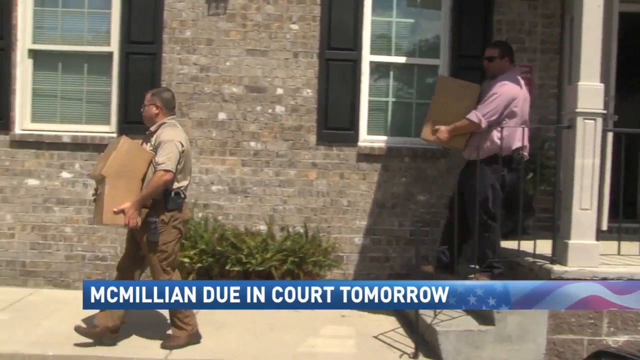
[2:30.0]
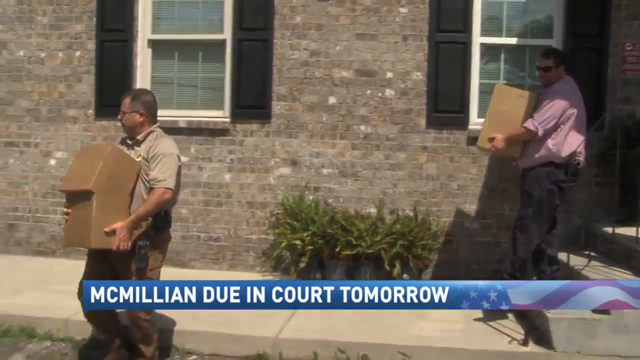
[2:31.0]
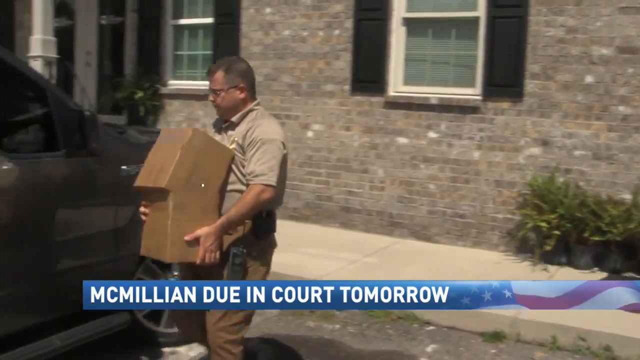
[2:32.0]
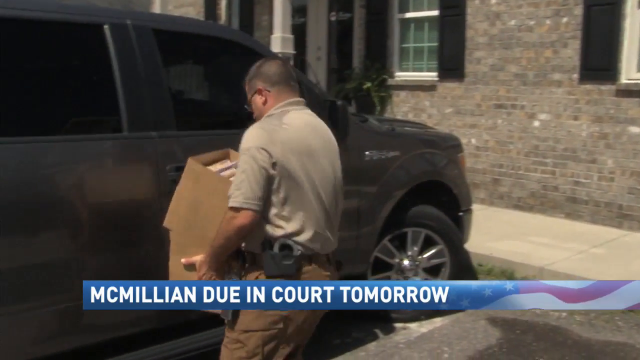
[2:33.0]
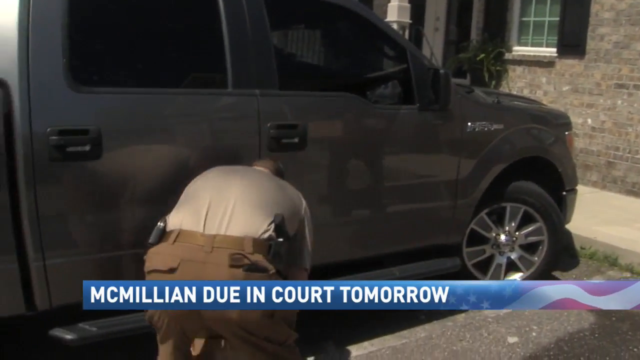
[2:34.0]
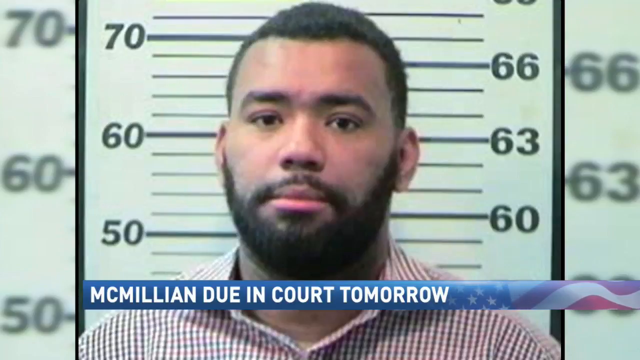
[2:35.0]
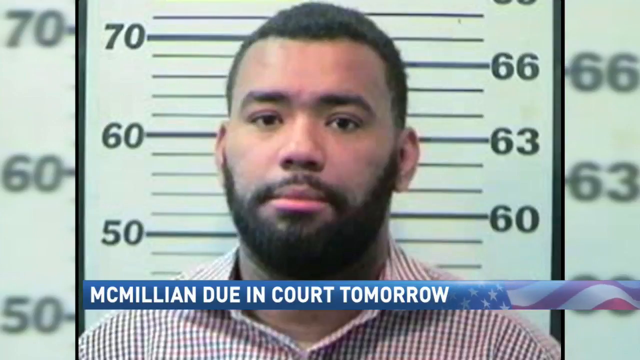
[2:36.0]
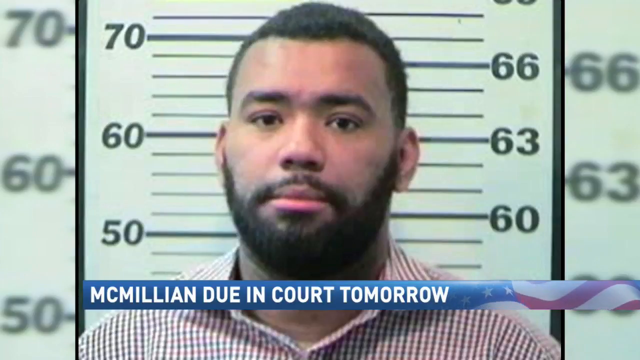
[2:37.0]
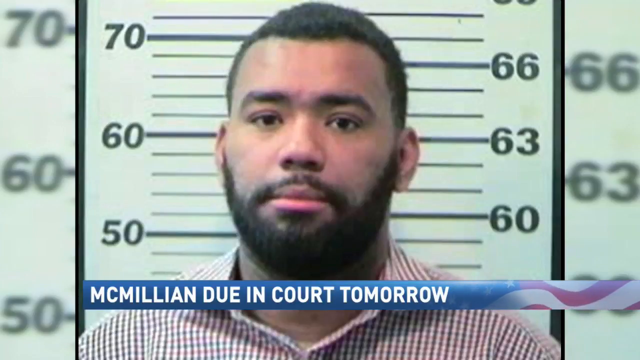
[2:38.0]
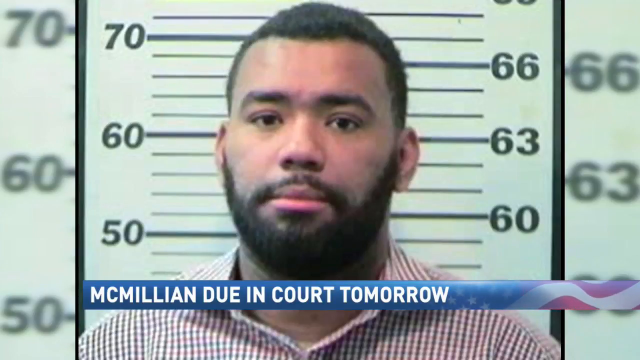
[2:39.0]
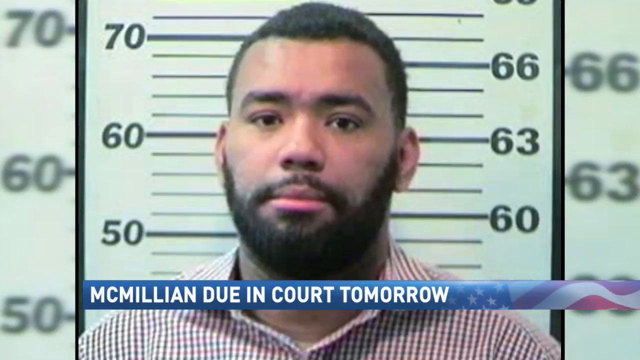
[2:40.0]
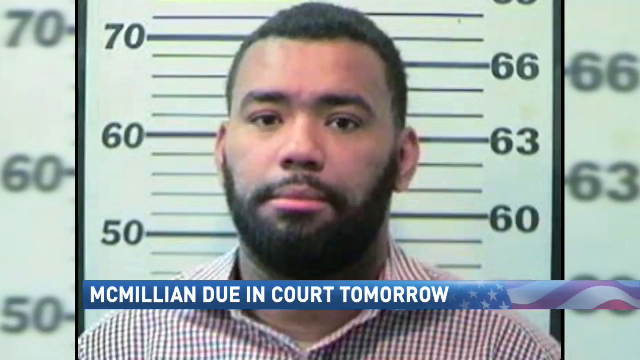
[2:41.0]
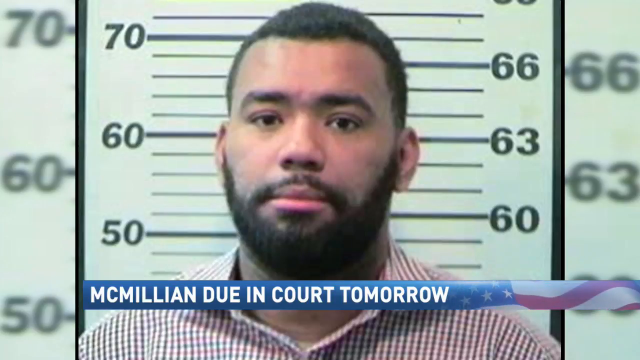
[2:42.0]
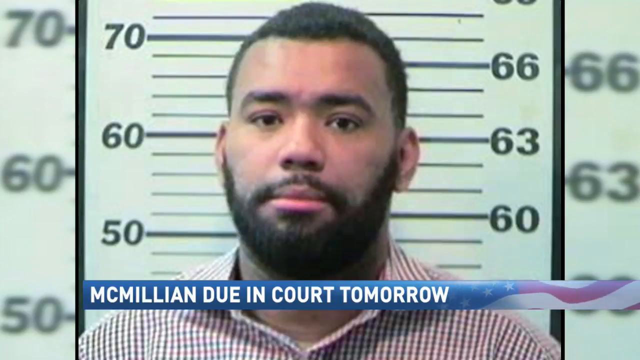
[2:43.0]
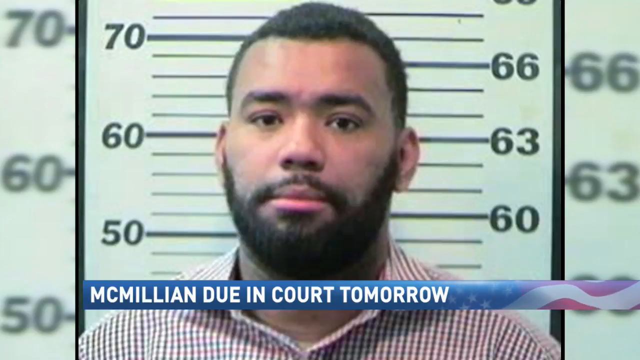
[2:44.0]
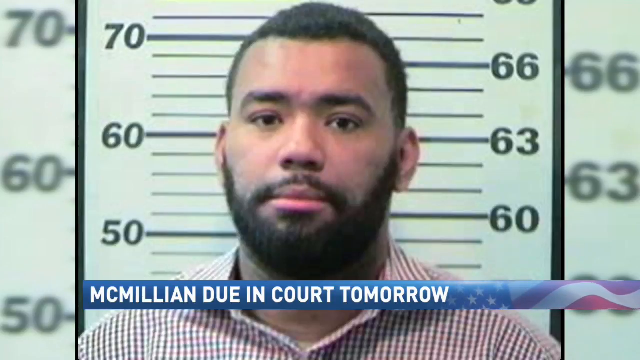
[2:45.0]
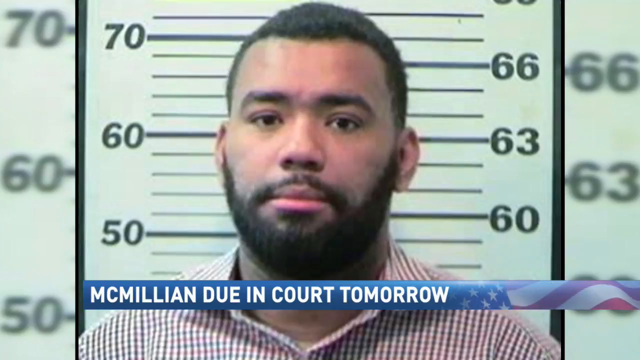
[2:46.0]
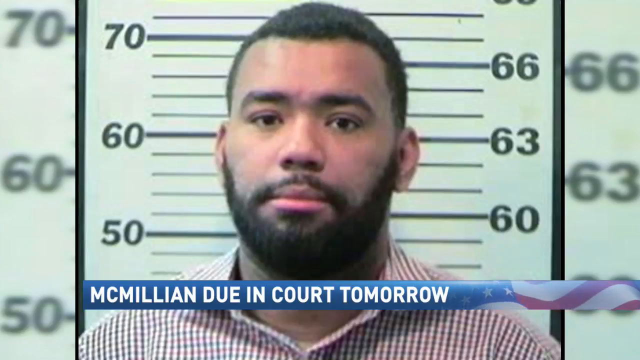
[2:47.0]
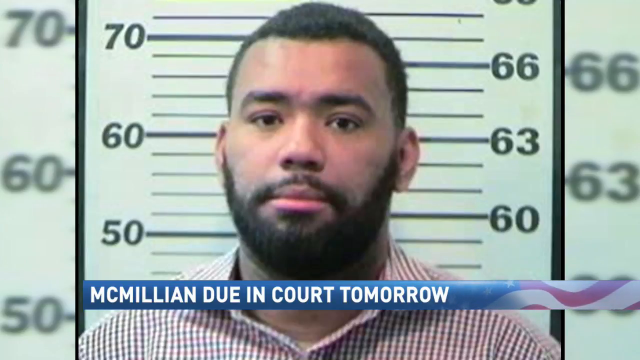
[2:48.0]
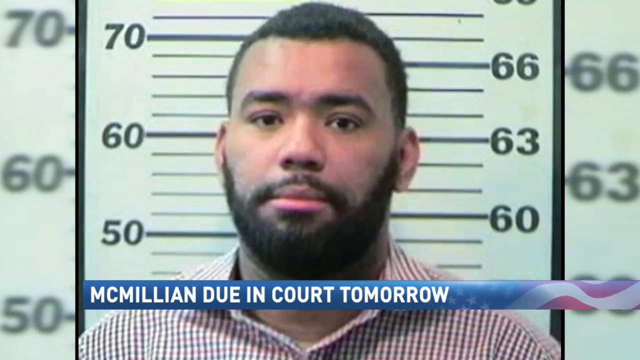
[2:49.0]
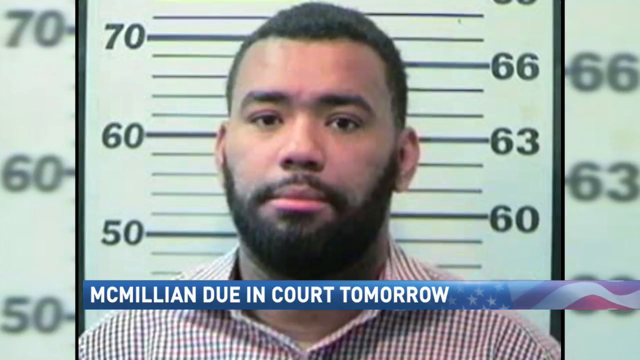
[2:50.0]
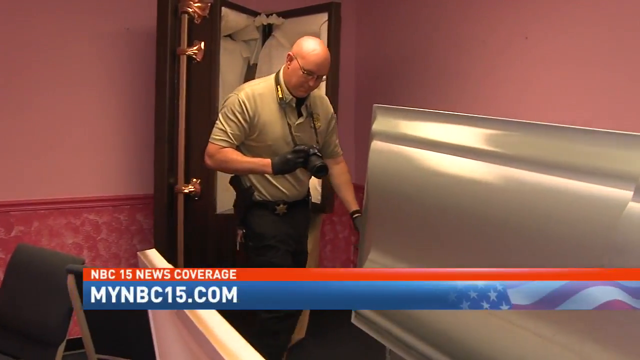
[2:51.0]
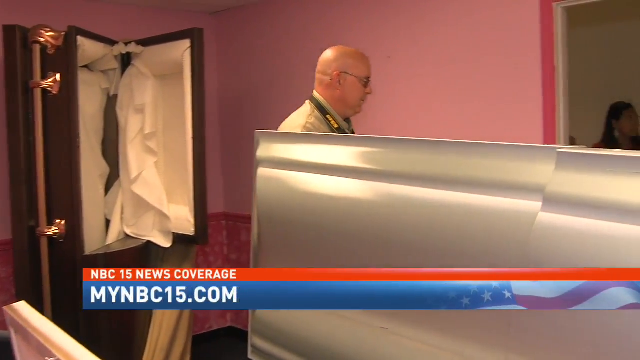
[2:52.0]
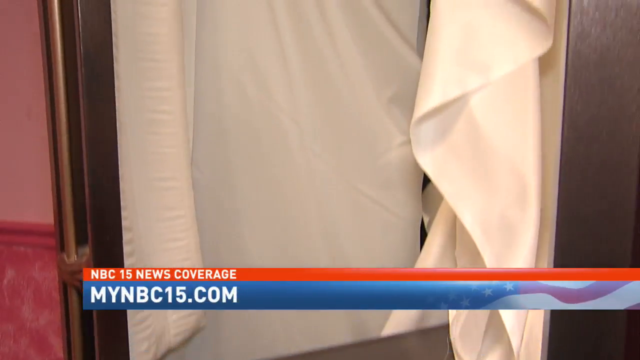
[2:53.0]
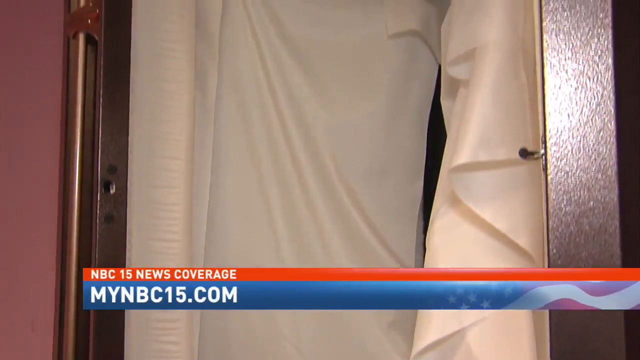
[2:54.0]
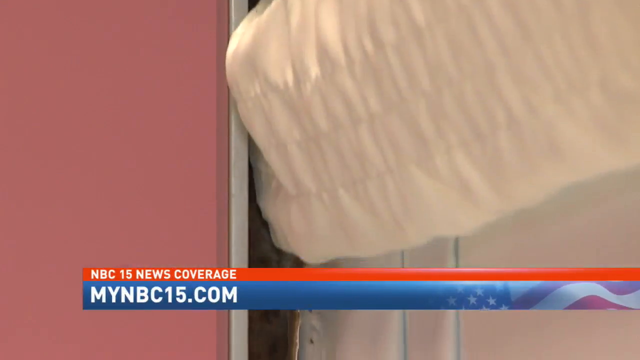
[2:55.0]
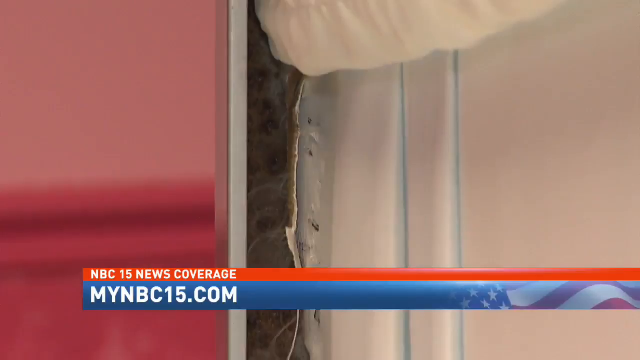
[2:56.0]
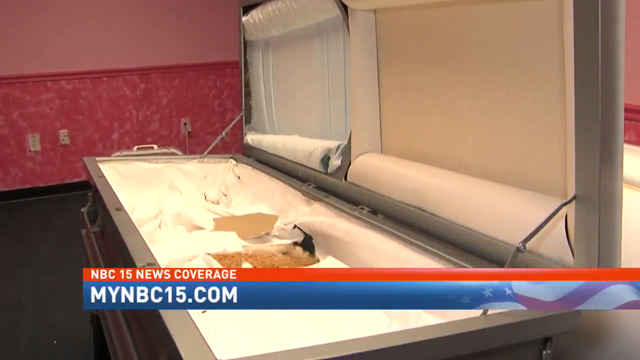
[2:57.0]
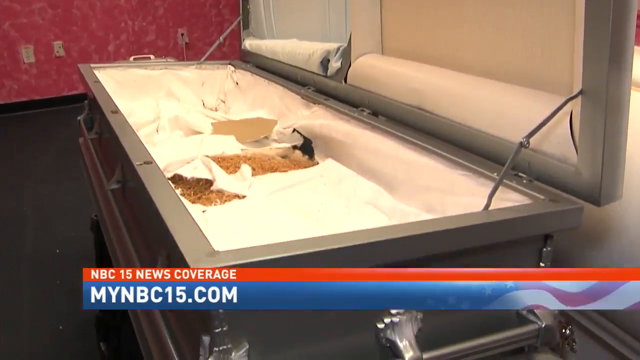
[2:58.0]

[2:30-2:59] Two men carry cardboard boxes outside a building. One man, in a light brown polo and glasses, carries two cardboard boxes; on the right side of the screen, a portly Caucasian man with dark sunglasses and a light red shirt carries one large cardboard box. Both wear black pants. In the foreground is a news banner saying "McMillian due in court tomorrow" with an American flag graphic. The men are in front of a large brown brick building with two windows, each with two black windowsills, and they carry the boxes to a large Ford truck. The scene changes to an African American man in front of a height sign indicating his height, wearing a red striped dress shirt, with a scruffy black beard. Then a bald Caucasian man is shown in front of a dark brown ornate casket, the video zooms on the casket, and then another casket is shown that is open from both sides.